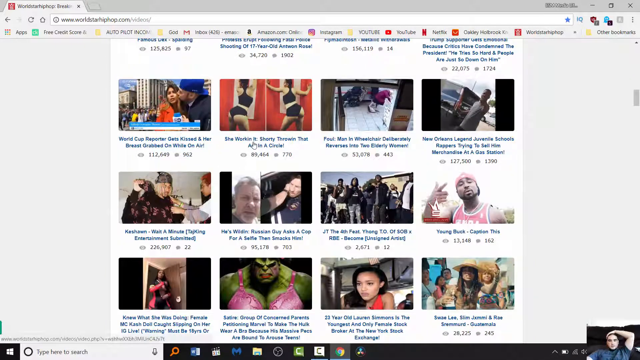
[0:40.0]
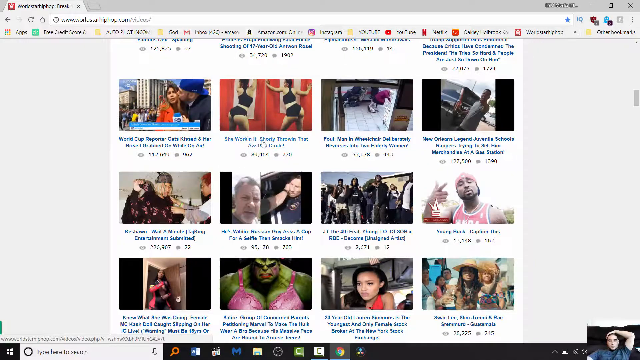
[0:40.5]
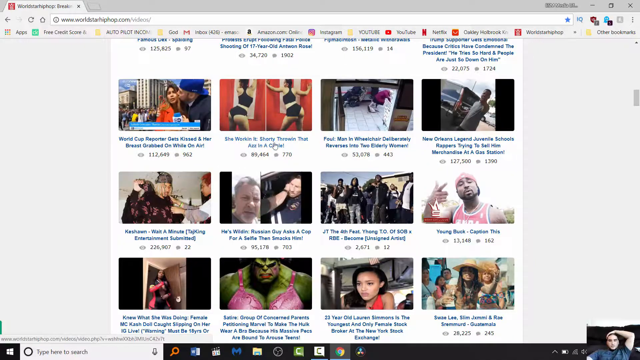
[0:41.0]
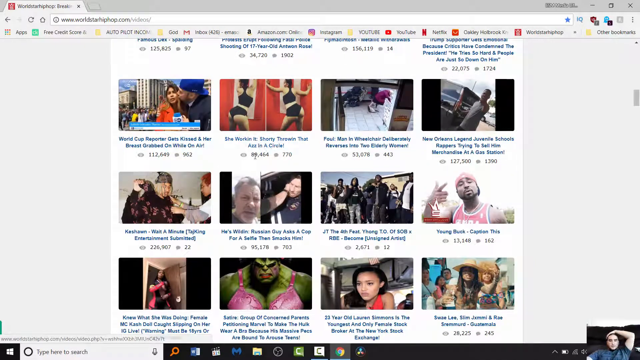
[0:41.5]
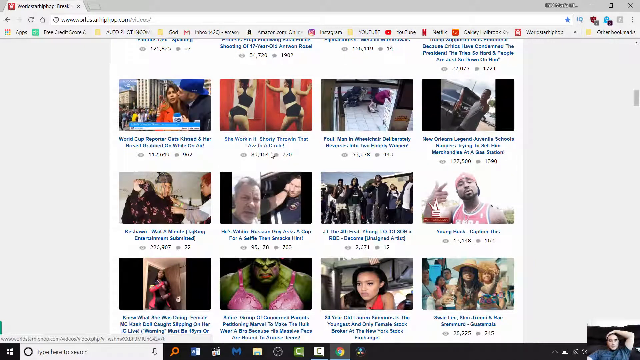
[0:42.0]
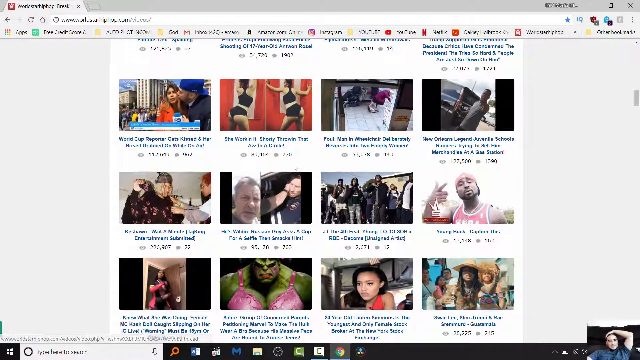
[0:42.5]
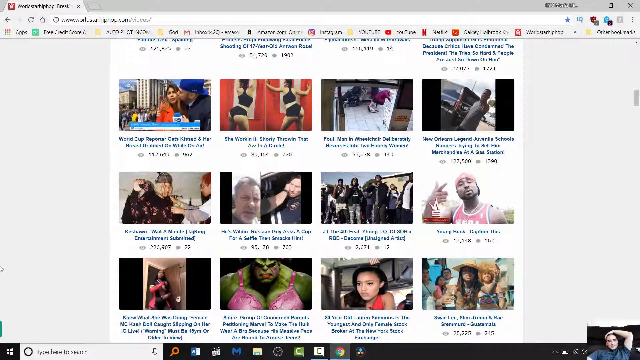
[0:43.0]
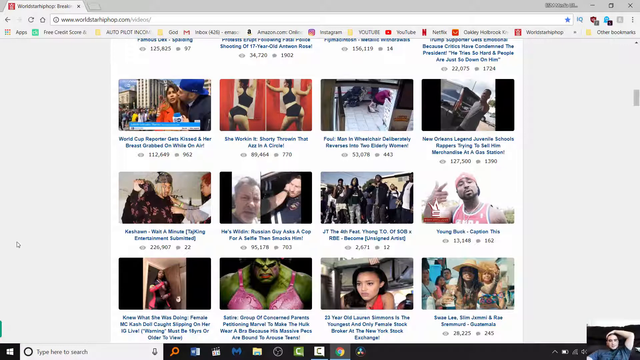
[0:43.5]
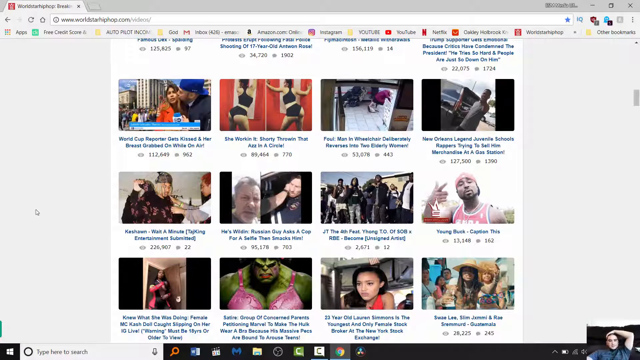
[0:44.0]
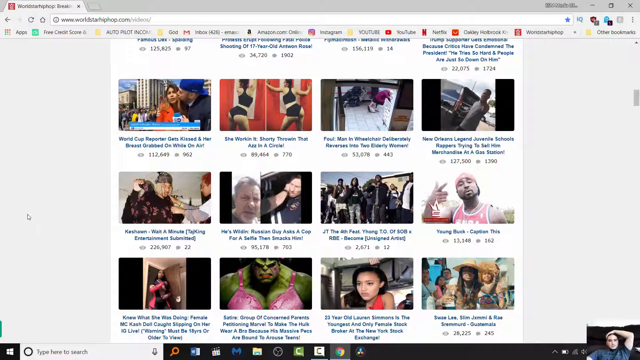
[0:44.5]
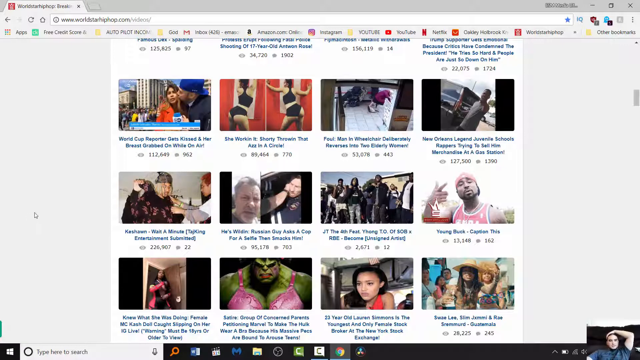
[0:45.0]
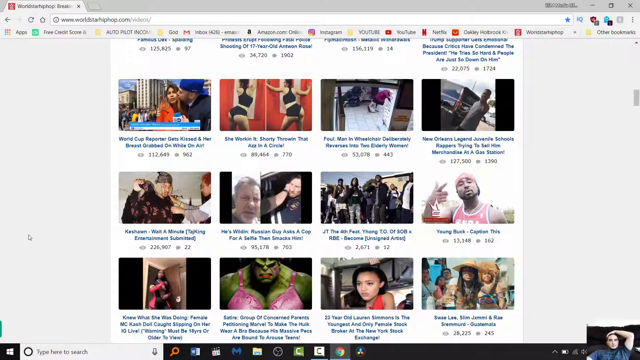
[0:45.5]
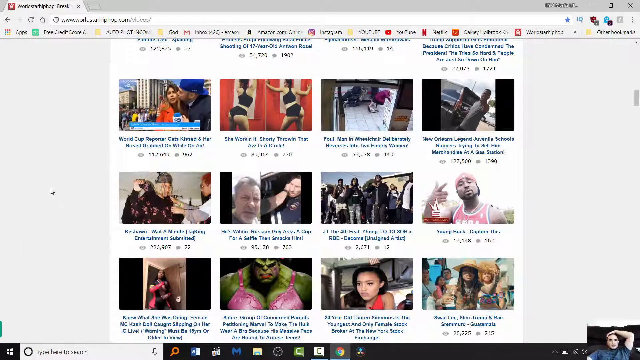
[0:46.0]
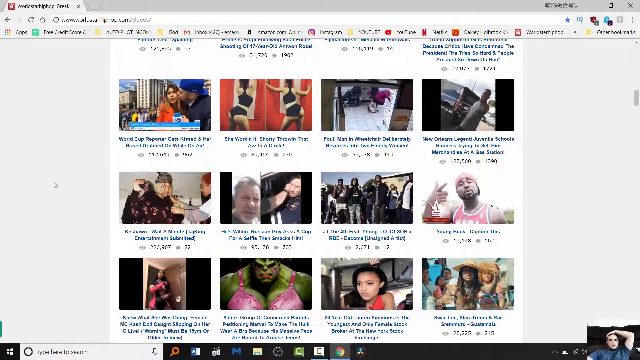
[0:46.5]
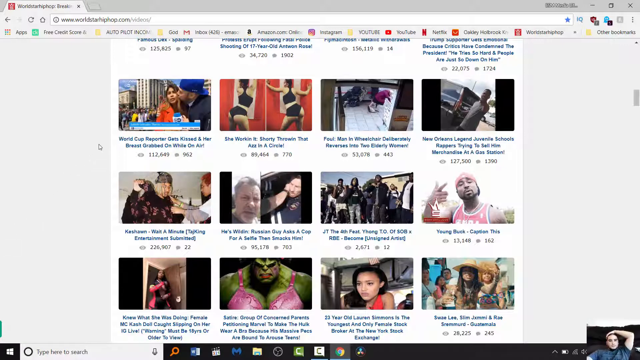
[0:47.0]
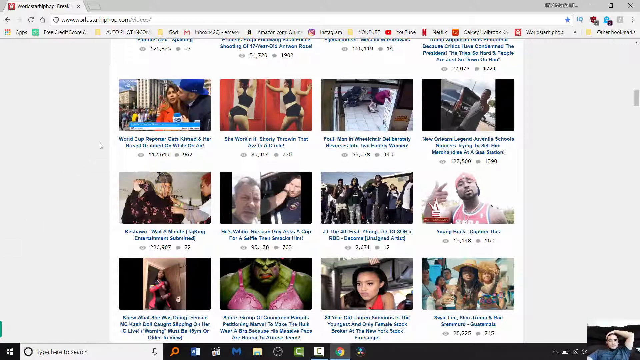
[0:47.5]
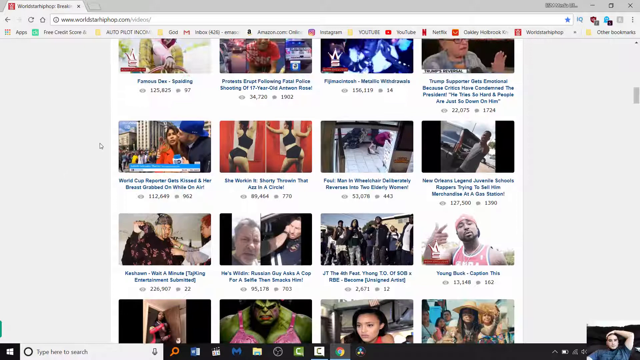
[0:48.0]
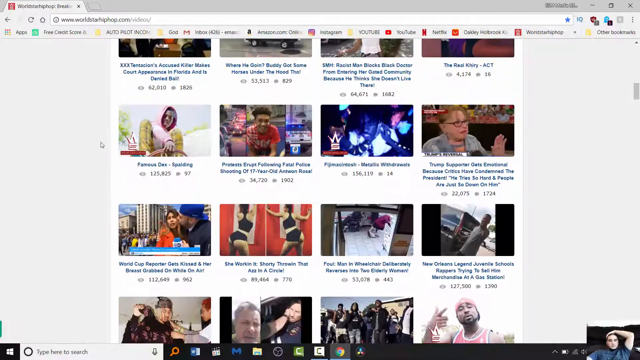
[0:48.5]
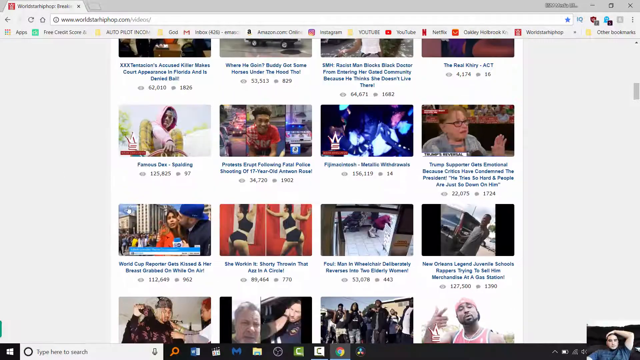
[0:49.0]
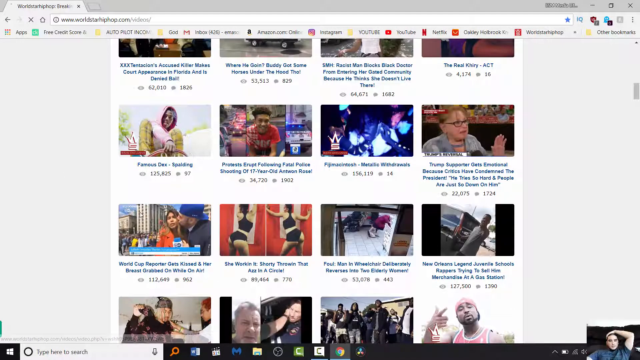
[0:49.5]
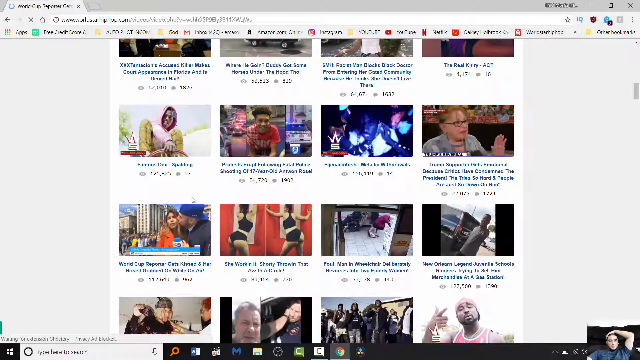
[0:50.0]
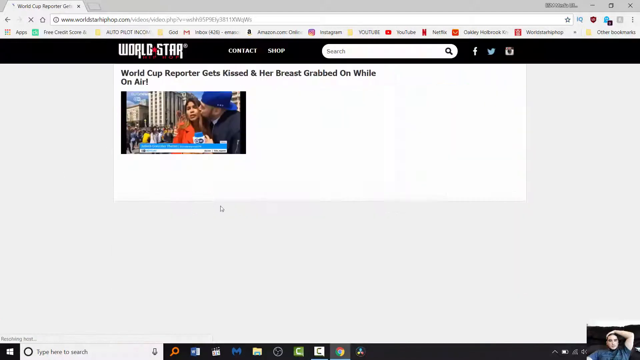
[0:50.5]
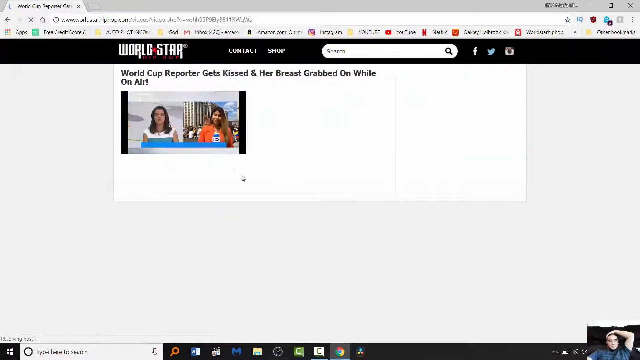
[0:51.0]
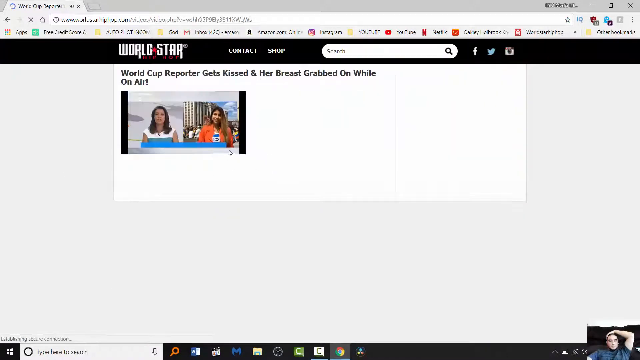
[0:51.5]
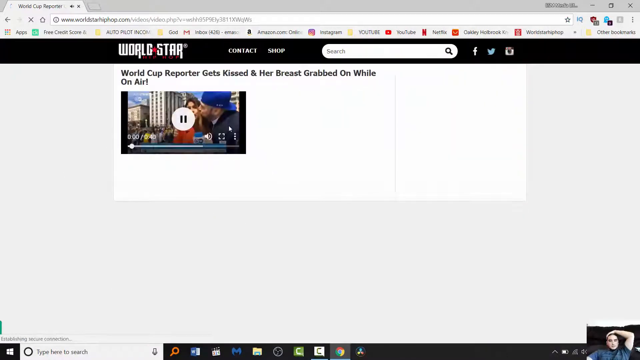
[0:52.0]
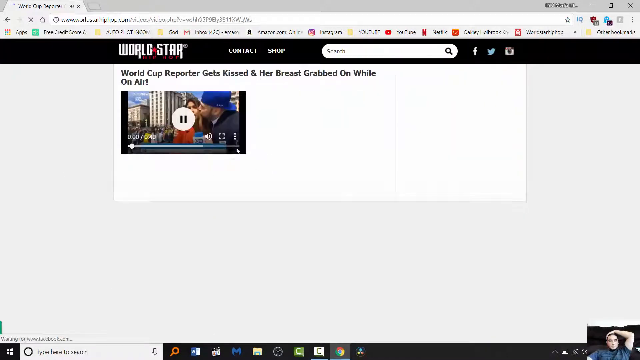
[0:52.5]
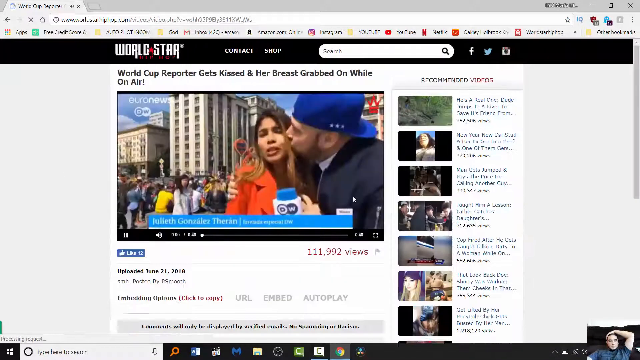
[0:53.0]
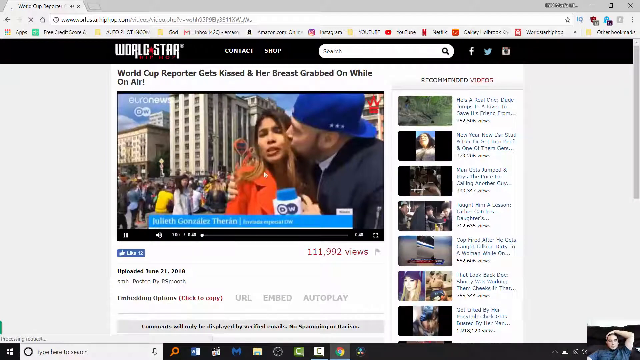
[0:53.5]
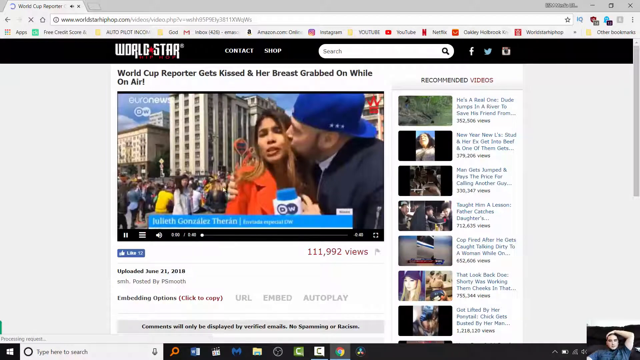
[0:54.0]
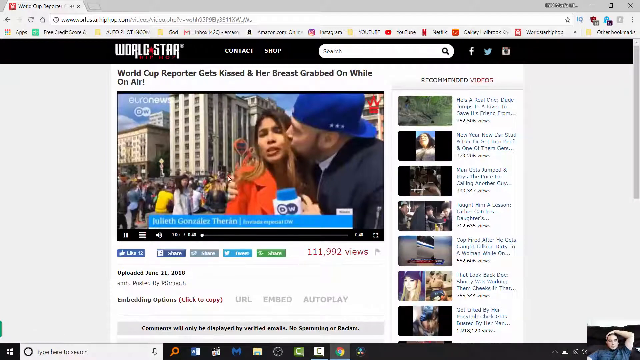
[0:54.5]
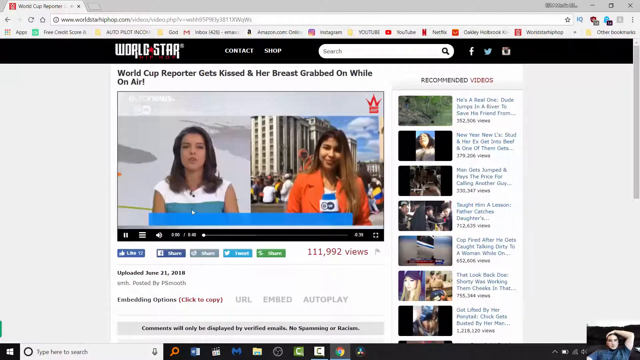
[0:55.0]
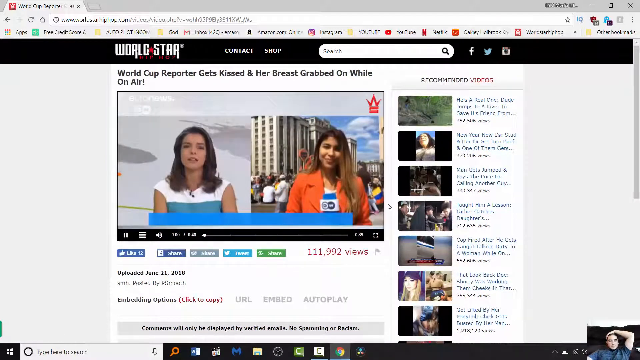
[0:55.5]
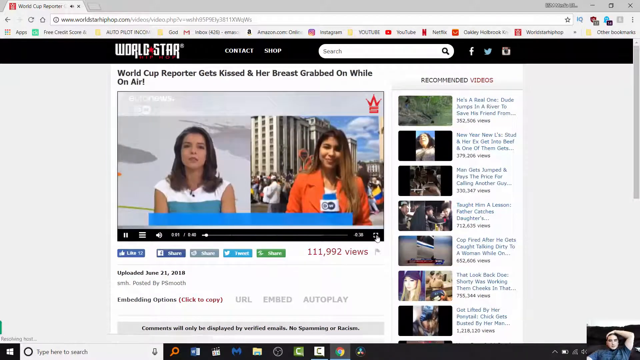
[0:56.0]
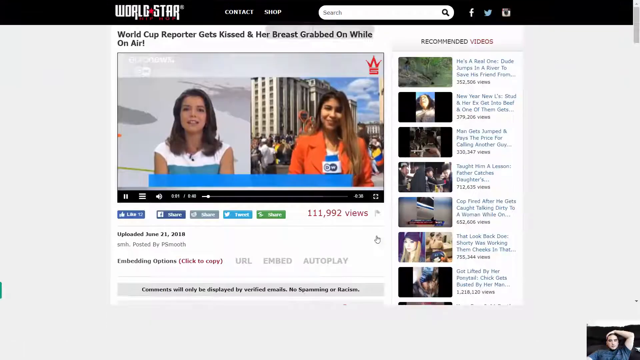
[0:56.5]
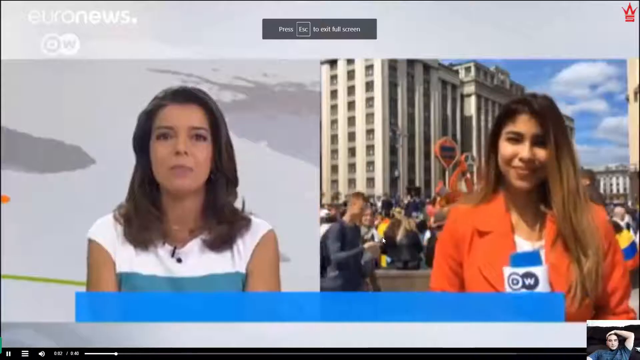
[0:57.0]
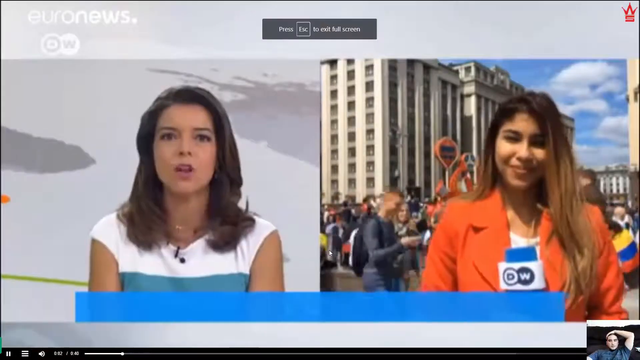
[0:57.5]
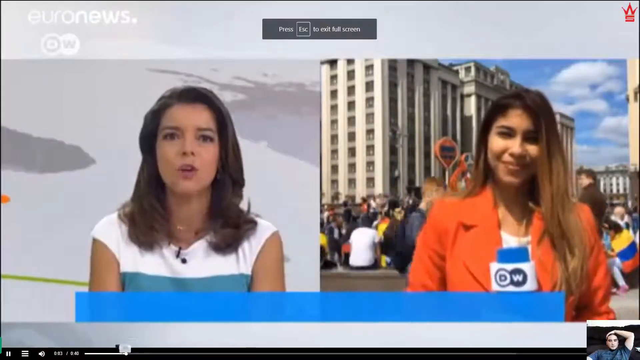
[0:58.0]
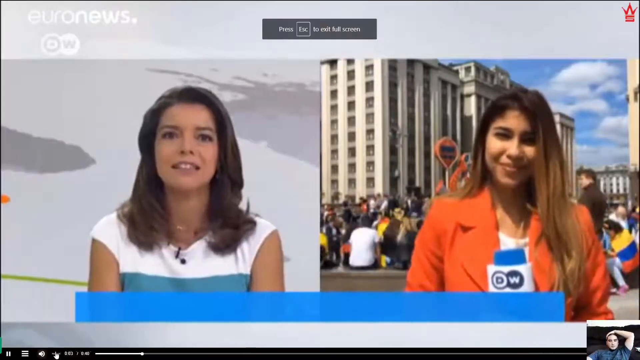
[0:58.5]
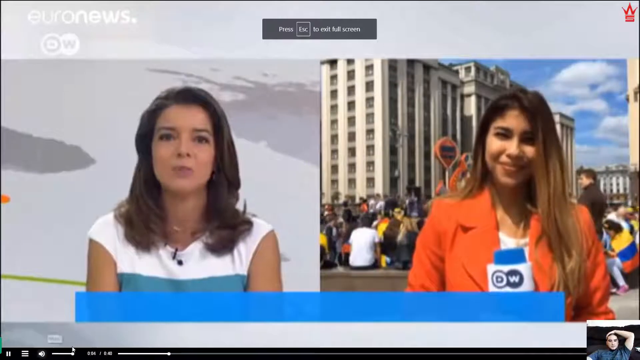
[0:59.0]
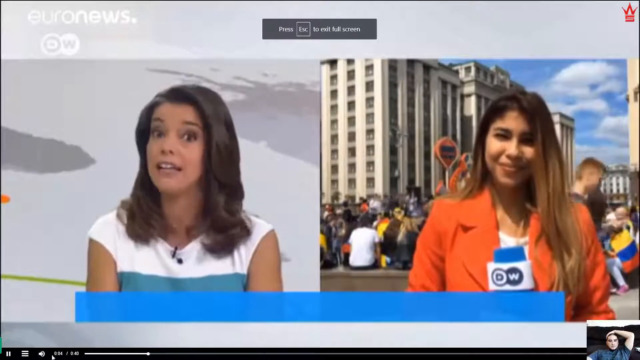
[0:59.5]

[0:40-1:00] The shared screen shows a Chrome browser with links to videos arranged in rows of four, their captions in blue. The man at the bottom of the screen places his hand on his head as he scrolls up and down the page. He hovers over the videos, then selects one whose thumbnail shows a man in a blue baseball cap and a black t-shirt kissing a female reporter in an orange blazer on the cheek. The video's caption reads 'World Cup reporter gets kissed and her breast grabbed on while on air'. He pauses the video, then plays it, and clicks the full screen icon so the video appears in full screen. It shows two screens side by side with two reporters.